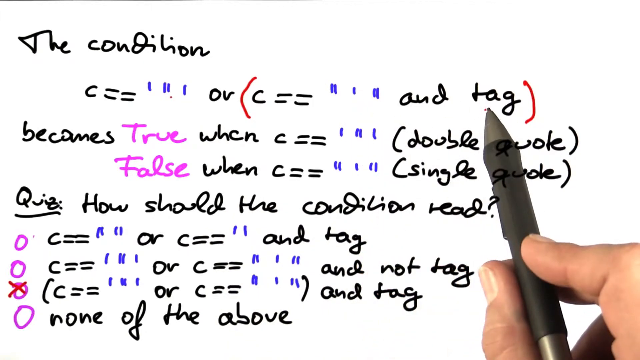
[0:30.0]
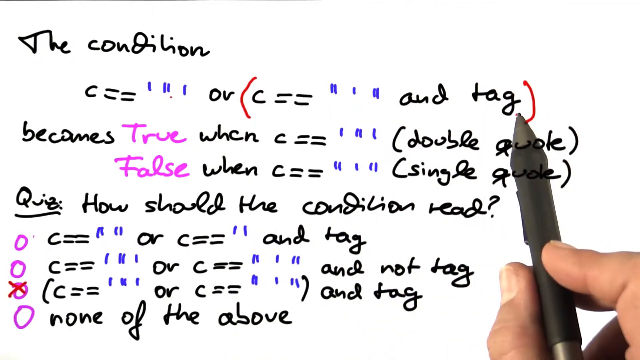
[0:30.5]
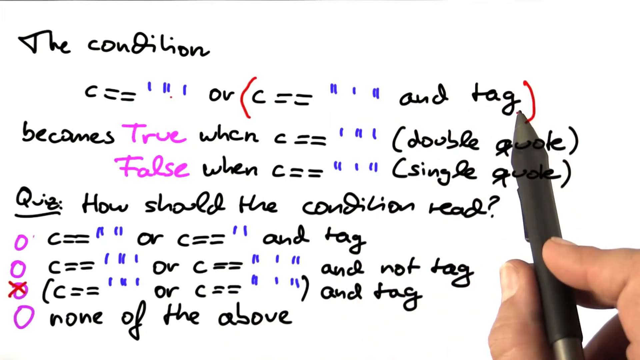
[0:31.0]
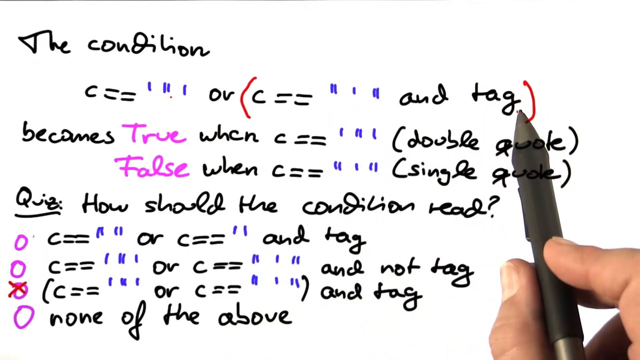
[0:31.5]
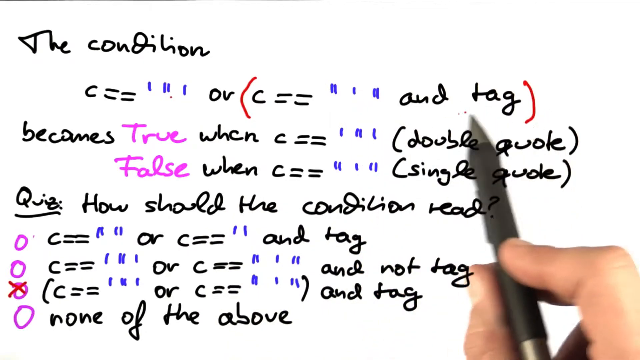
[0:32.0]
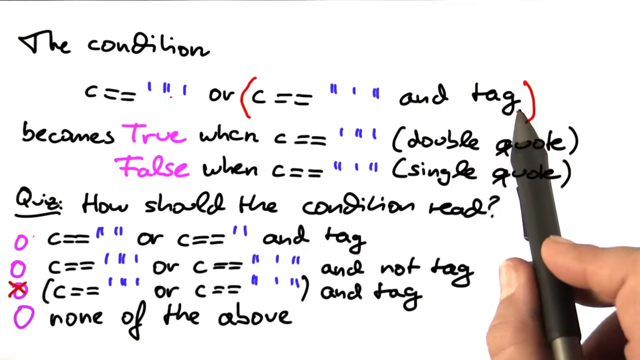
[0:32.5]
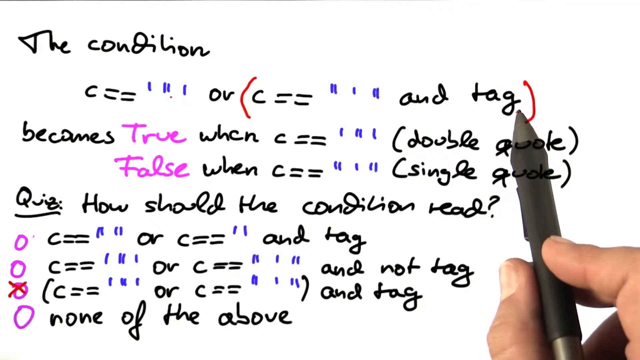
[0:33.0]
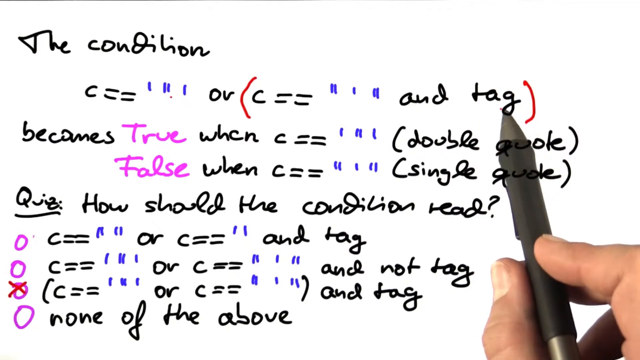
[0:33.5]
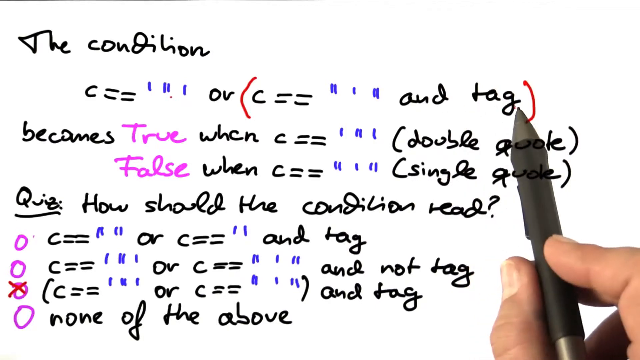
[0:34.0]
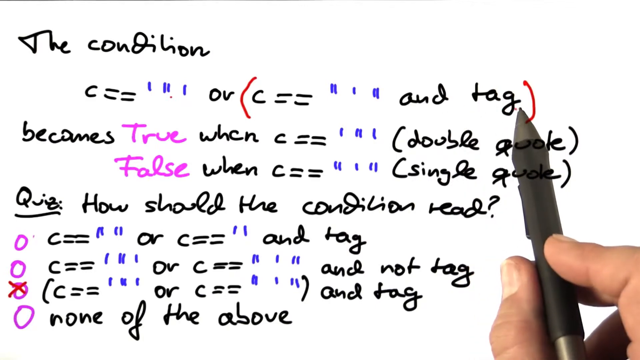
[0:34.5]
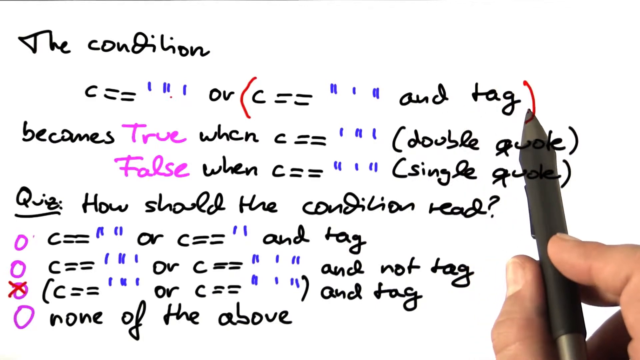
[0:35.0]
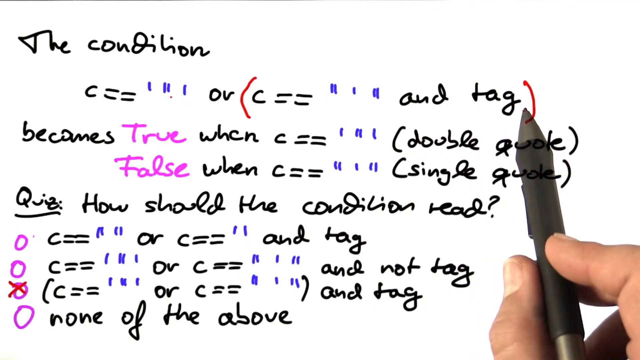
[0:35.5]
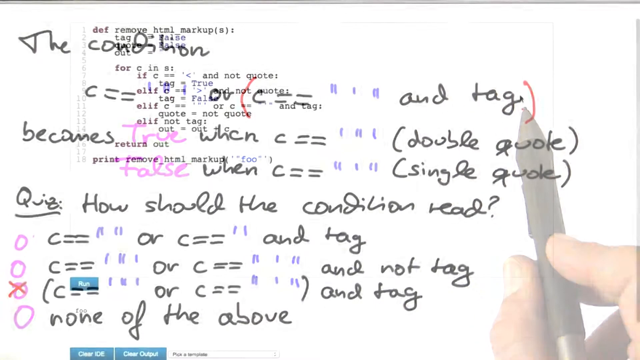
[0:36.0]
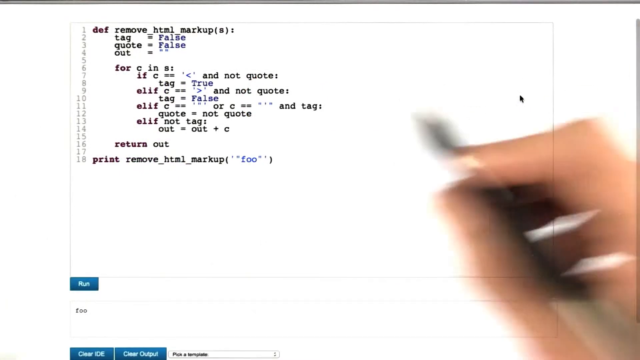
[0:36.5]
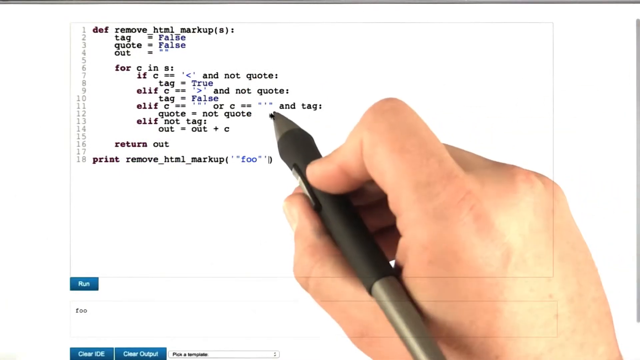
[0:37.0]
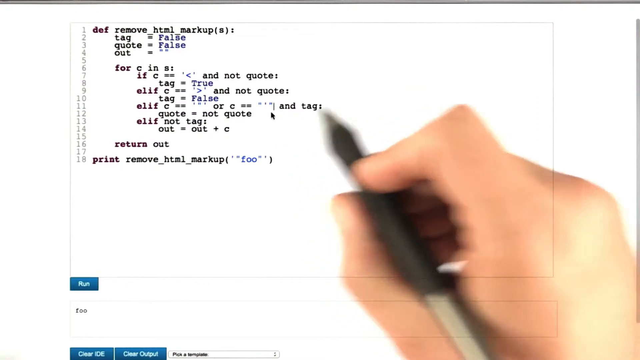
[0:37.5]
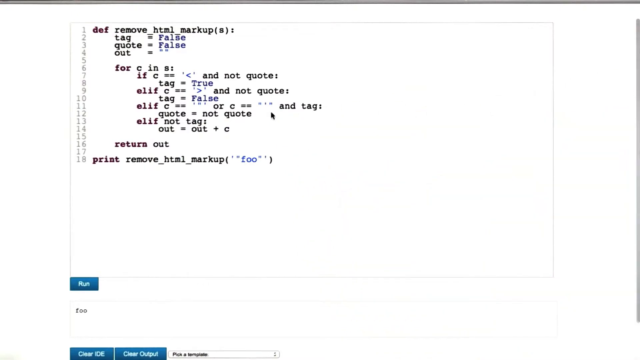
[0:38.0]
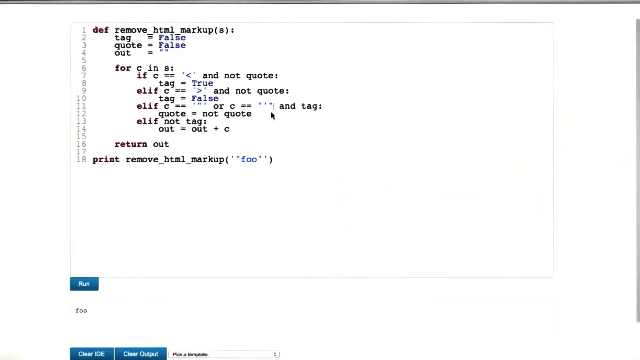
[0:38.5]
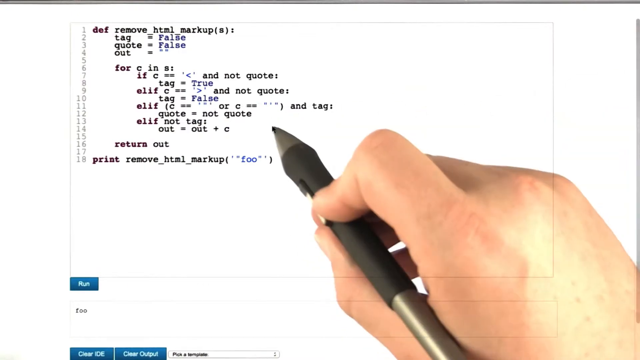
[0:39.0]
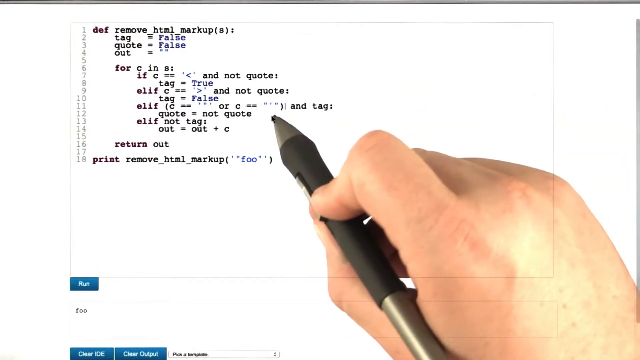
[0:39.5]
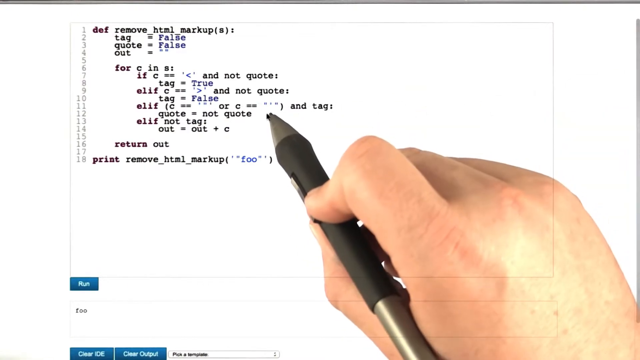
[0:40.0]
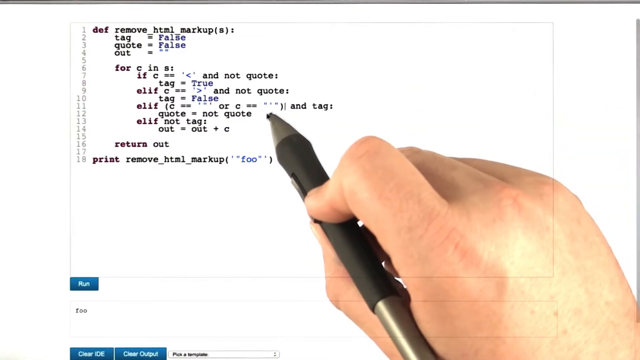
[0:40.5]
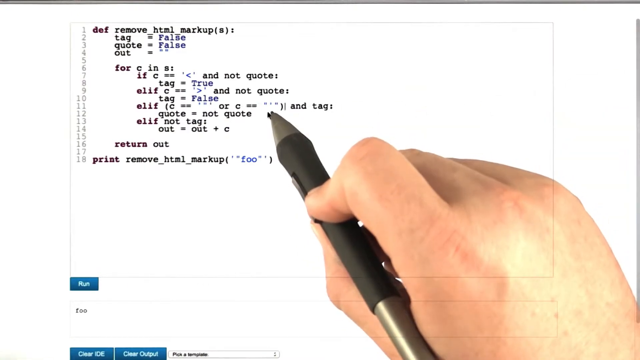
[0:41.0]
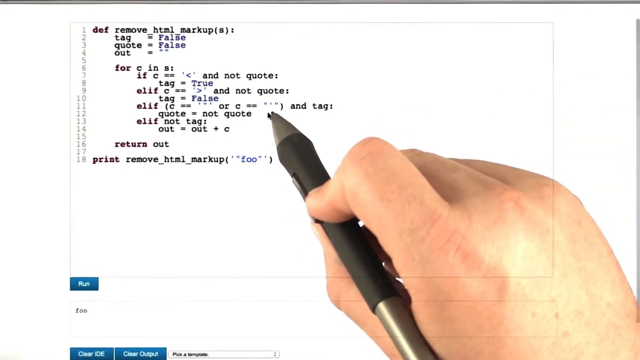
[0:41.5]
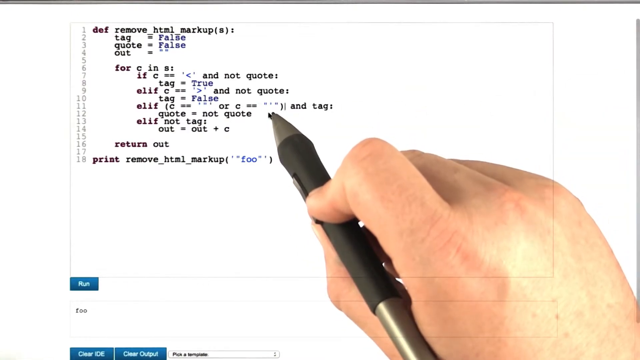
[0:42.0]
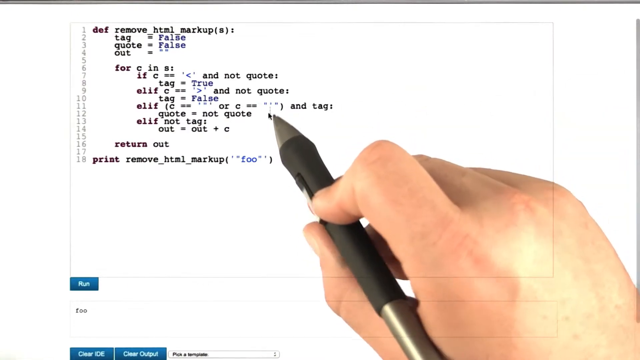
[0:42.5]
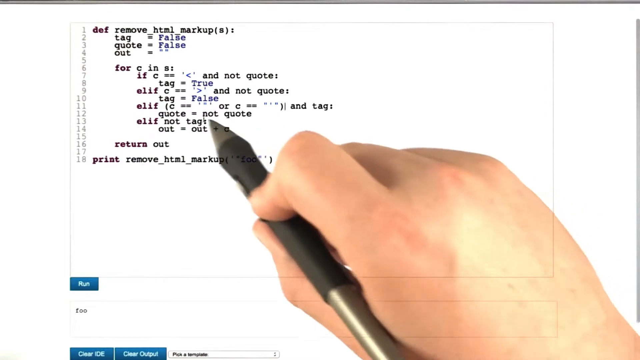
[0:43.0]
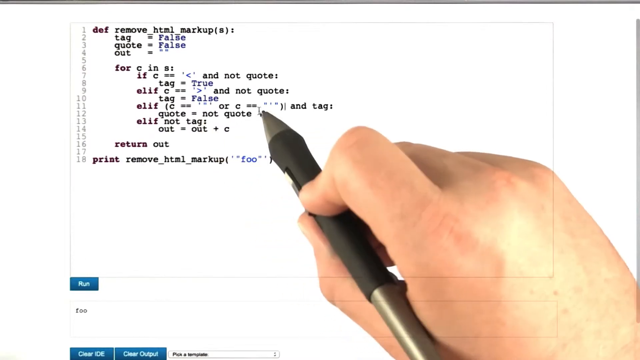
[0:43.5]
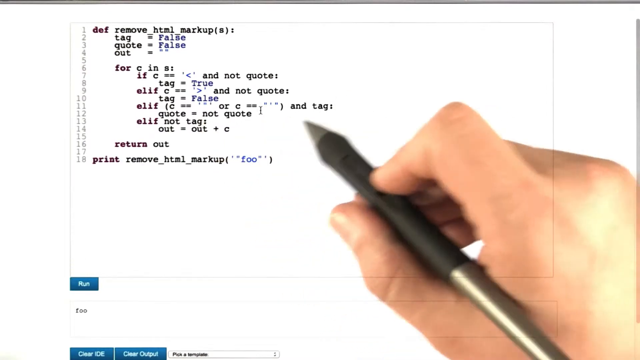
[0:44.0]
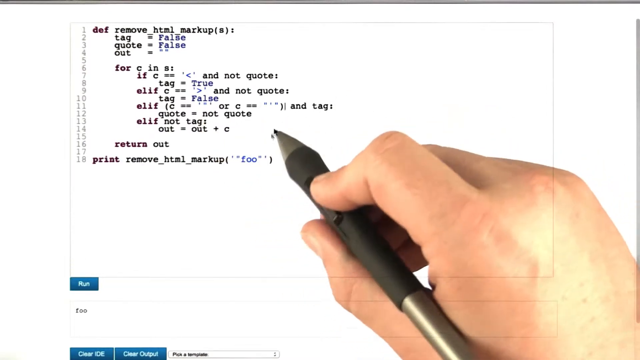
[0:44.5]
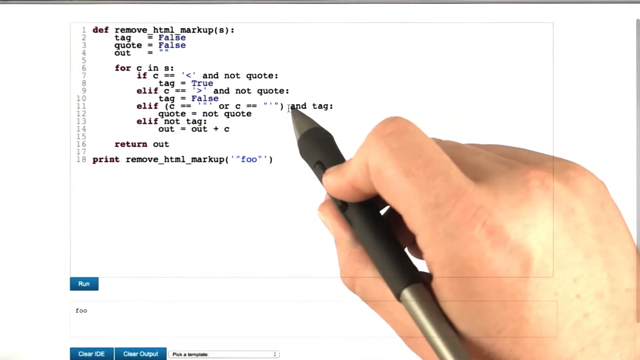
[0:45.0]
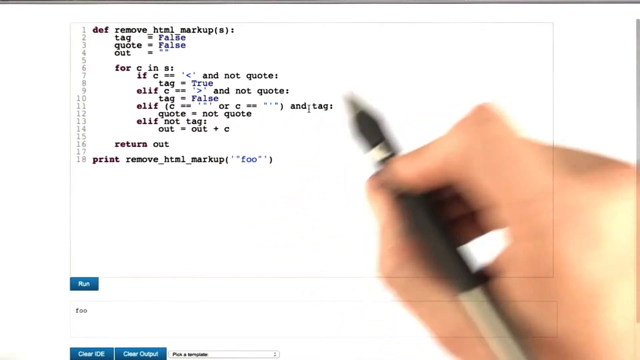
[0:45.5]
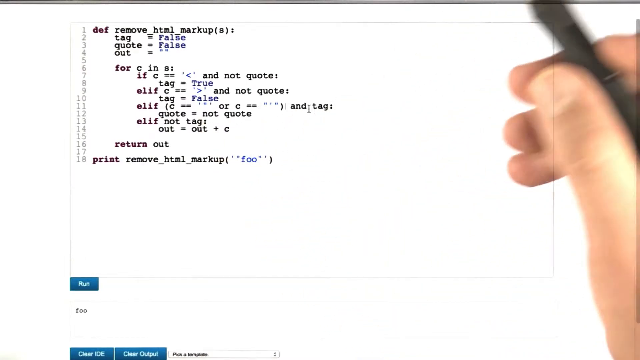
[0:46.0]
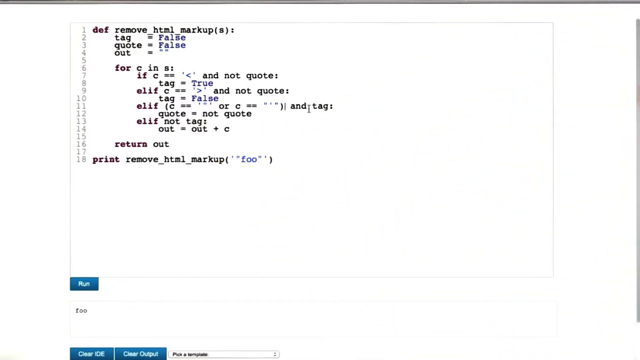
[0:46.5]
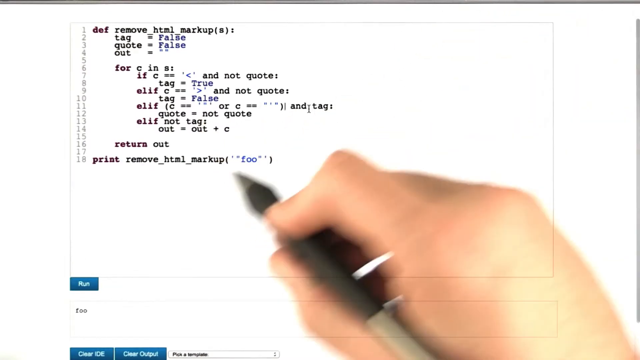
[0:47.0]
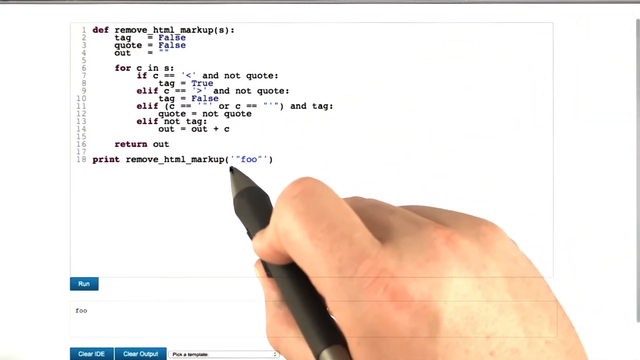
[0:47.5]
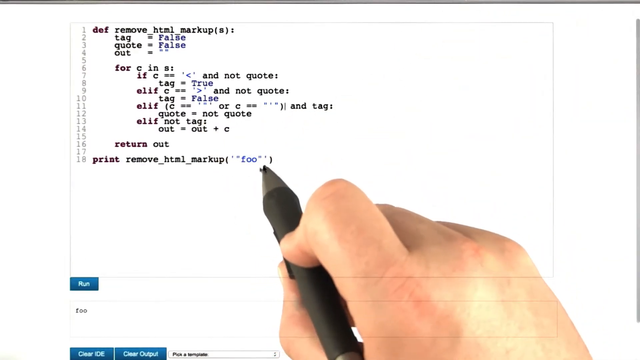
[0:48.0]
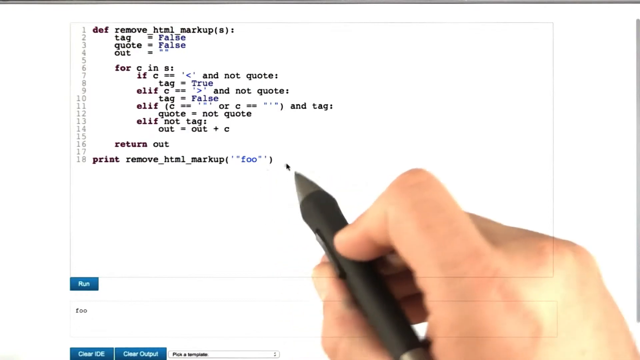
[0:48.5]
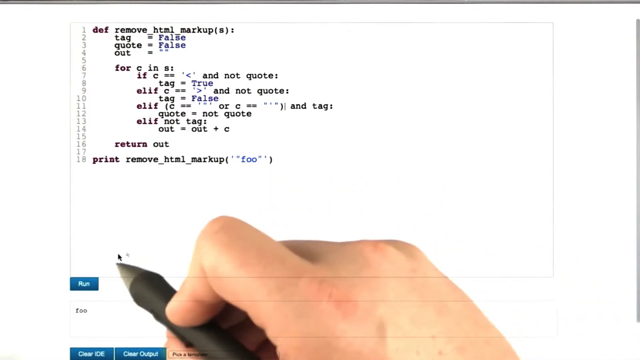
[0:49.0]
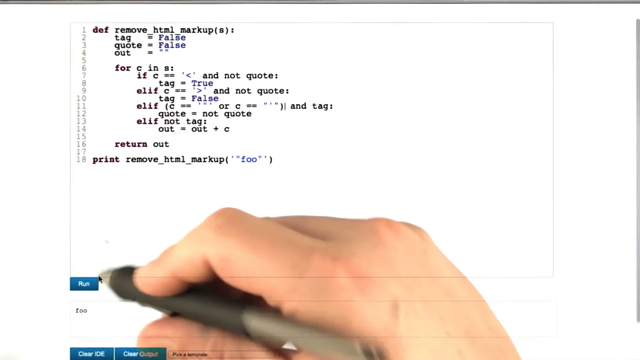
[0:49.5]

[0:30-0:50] The fingers and the ink pen are toward the right side, pointing at "tag". Beneath the earlier text, black text says "quiz", underlined, starting on the left side. Below it in black is "how should the condition read", and below that are three purple circles stacked vertically; the third one has a red x on it. Next to them are options similar to the text above, except the last one says "none of the above", so these are answers to the question. The video then cuts to a white background that looks like a computer screen. In the center, a thin white line forms a box about an inch from the top, two inches from the left and right, and two inches from the bottom. In the bottom left corner there is a blue run button with more letters below it that can't be made out. Inside the square, lines are numbered 1 through 18 down the side, with code written to the left of them. A hand comes in from the right and points at part of the code, which changes something. Then the pen is held down, pressing on something, and moved to a different part and around where it says "tag". The hand goes off the left side, comes back pointing at the bottom line, then goes down to the run button. The finger is still on top; the top of the finger, the side of the thumb pressing on the pen, almost all of the back of the hand, a little of the middle finger, and a little less of the ring finger are visible.